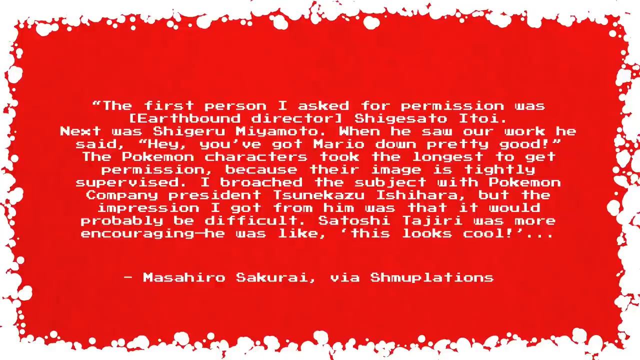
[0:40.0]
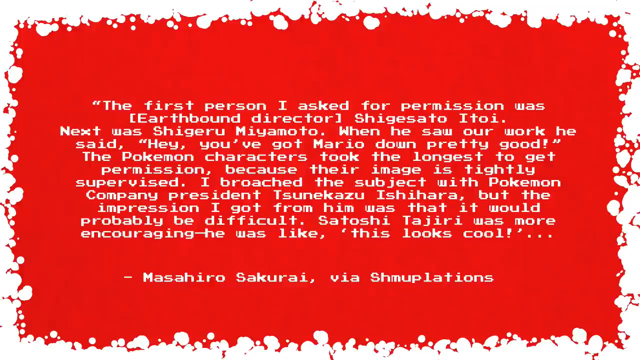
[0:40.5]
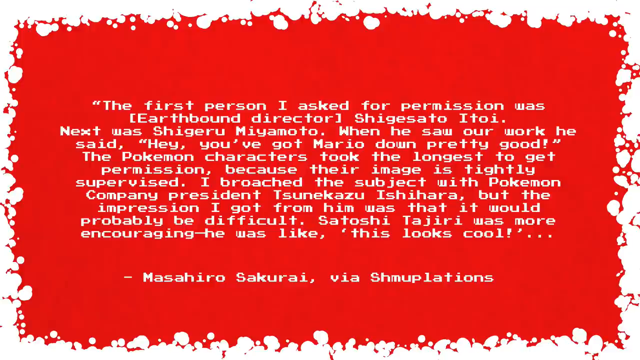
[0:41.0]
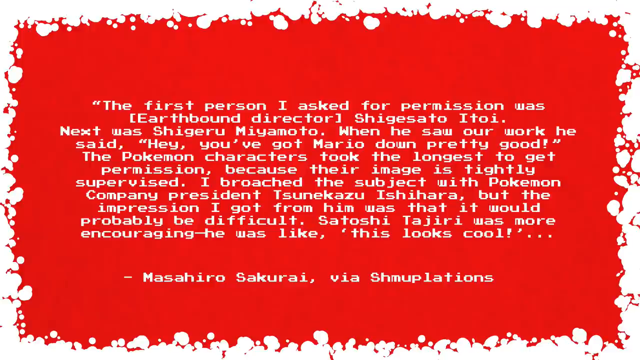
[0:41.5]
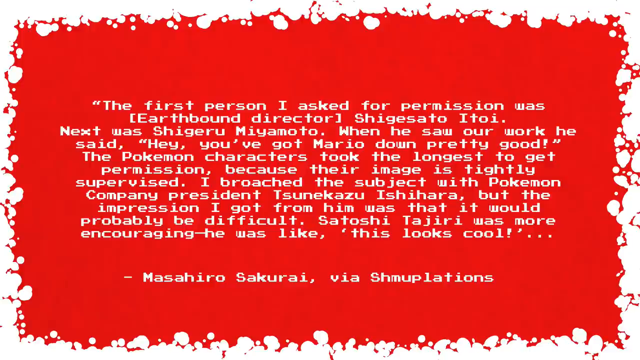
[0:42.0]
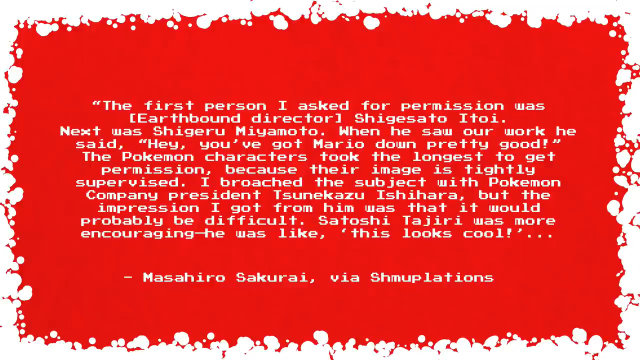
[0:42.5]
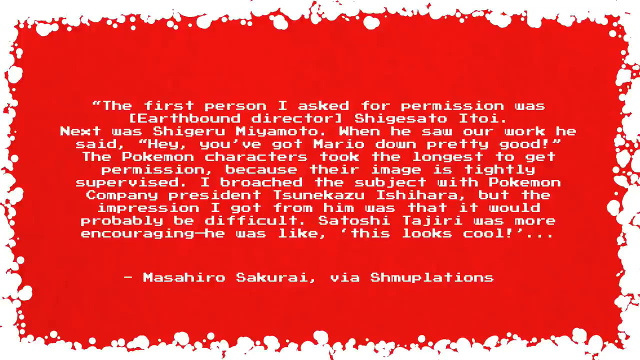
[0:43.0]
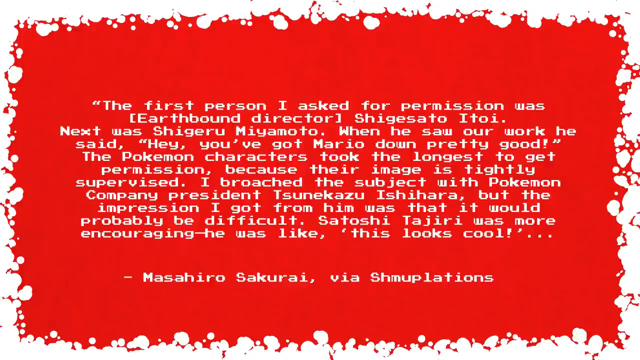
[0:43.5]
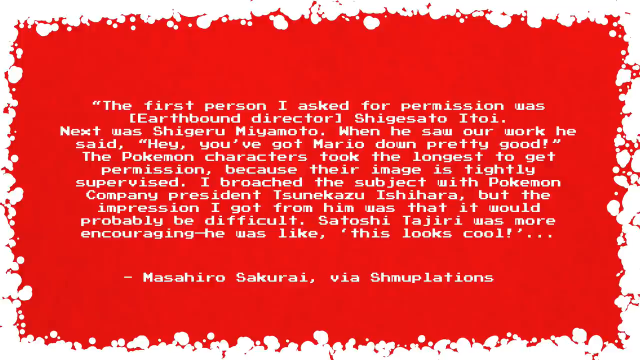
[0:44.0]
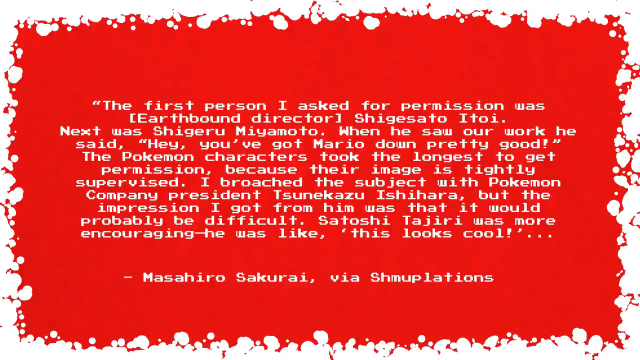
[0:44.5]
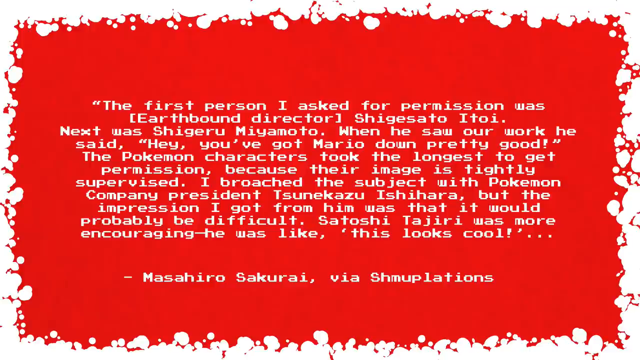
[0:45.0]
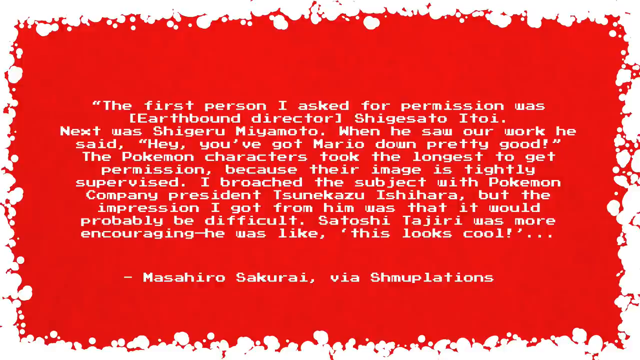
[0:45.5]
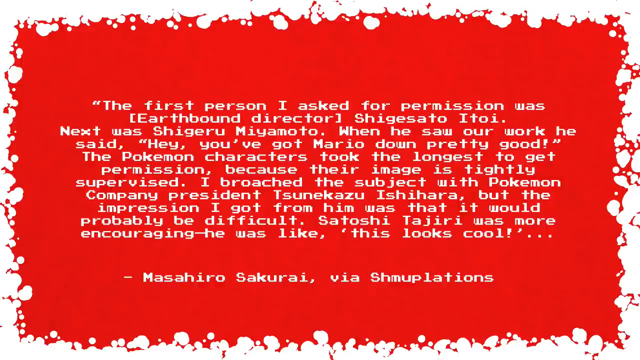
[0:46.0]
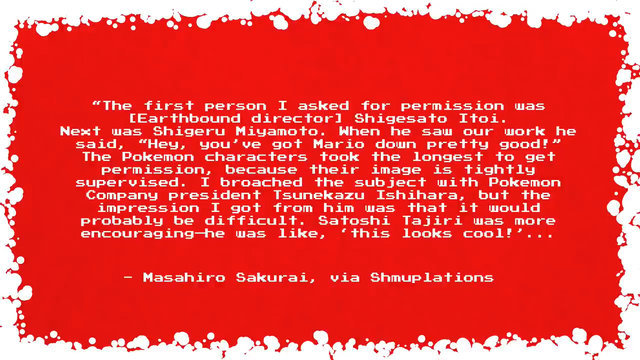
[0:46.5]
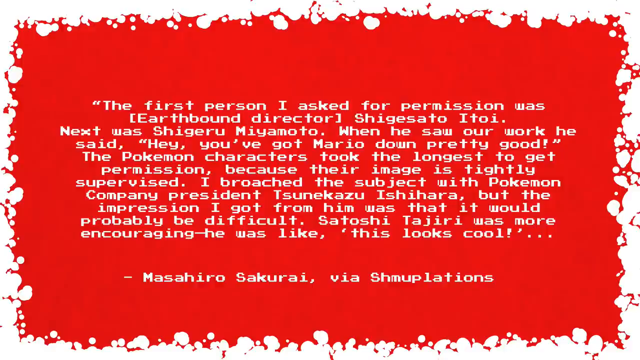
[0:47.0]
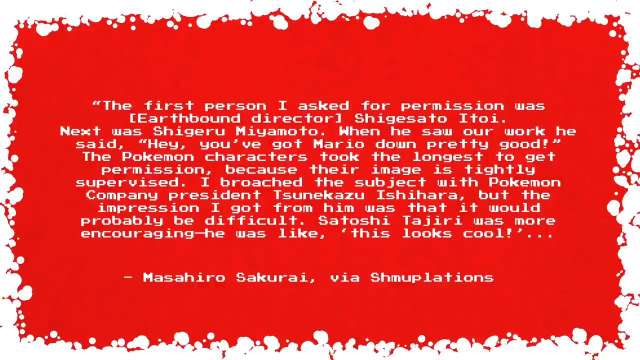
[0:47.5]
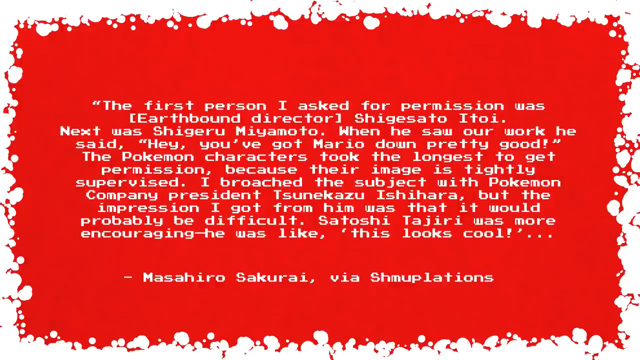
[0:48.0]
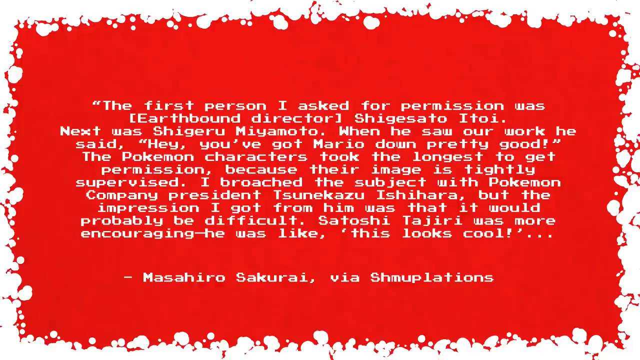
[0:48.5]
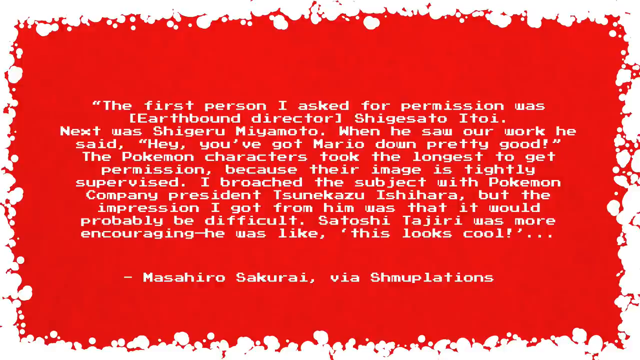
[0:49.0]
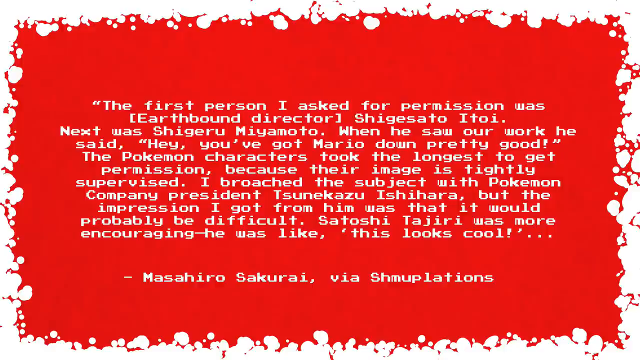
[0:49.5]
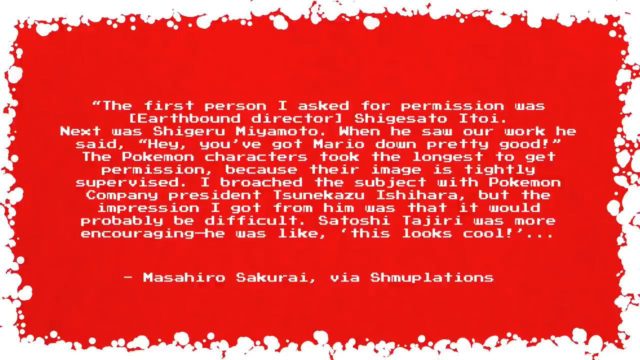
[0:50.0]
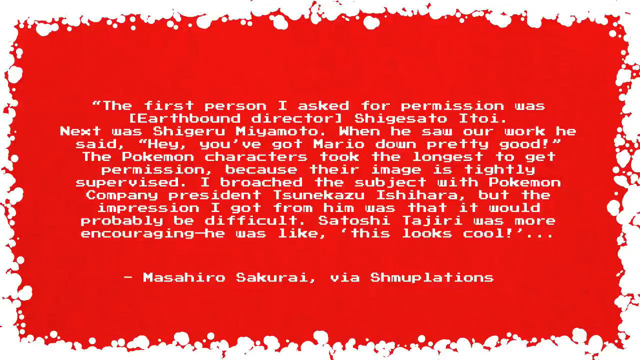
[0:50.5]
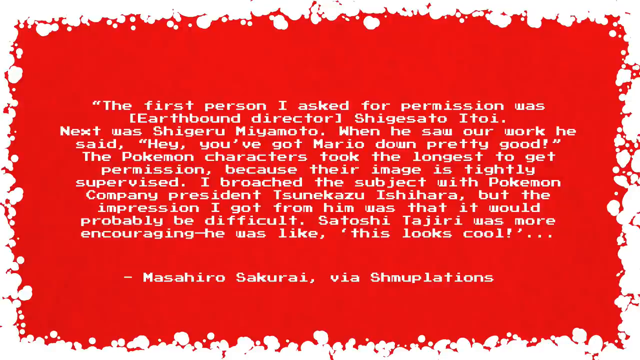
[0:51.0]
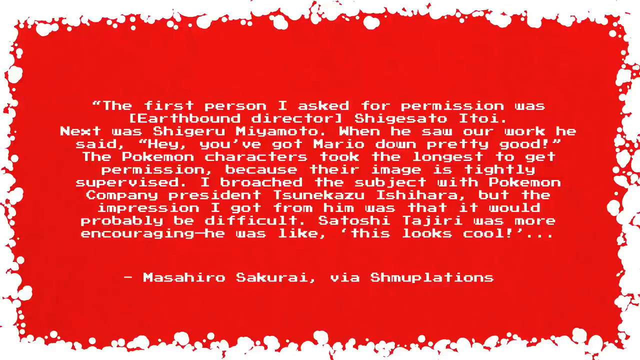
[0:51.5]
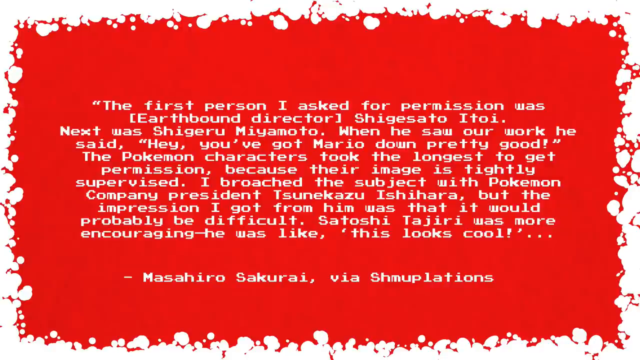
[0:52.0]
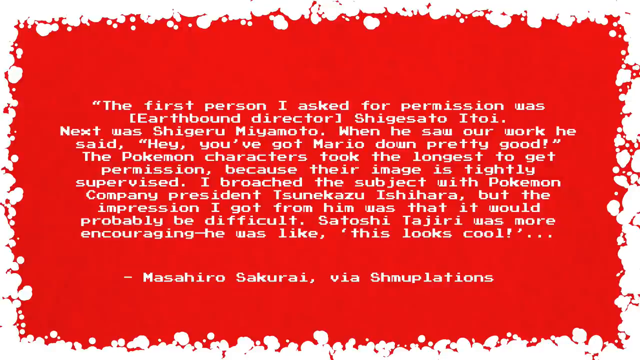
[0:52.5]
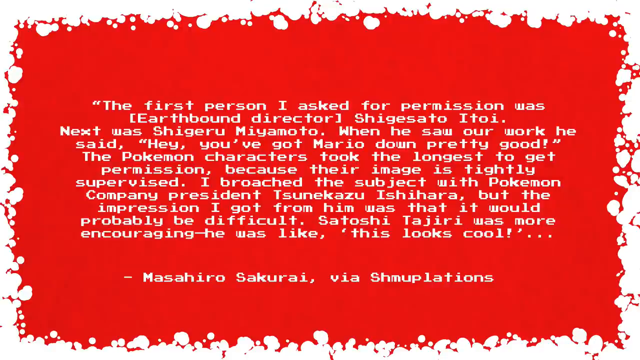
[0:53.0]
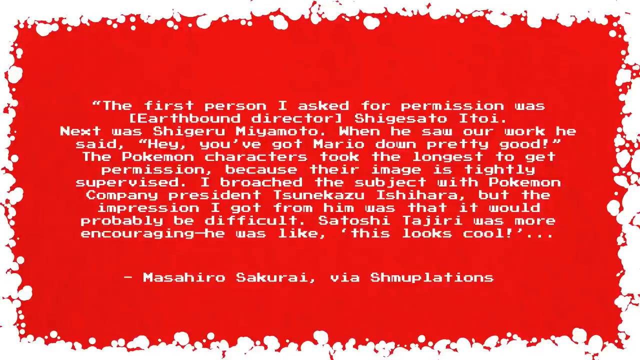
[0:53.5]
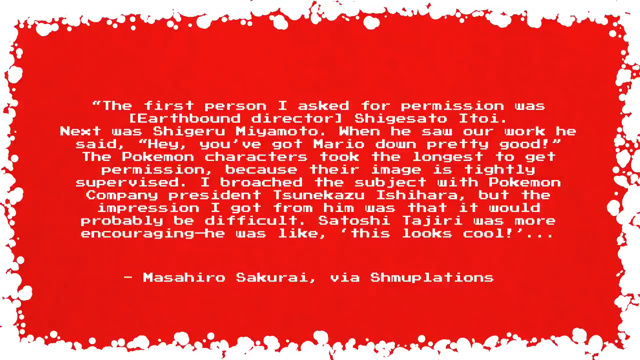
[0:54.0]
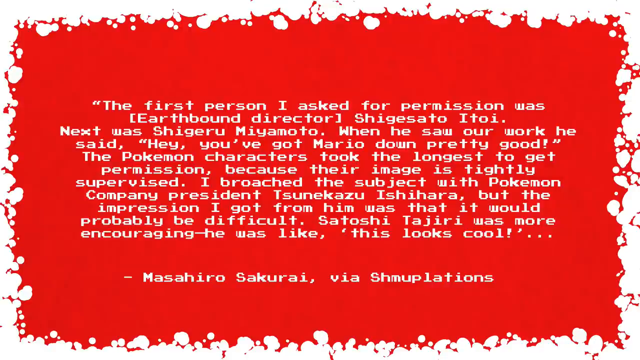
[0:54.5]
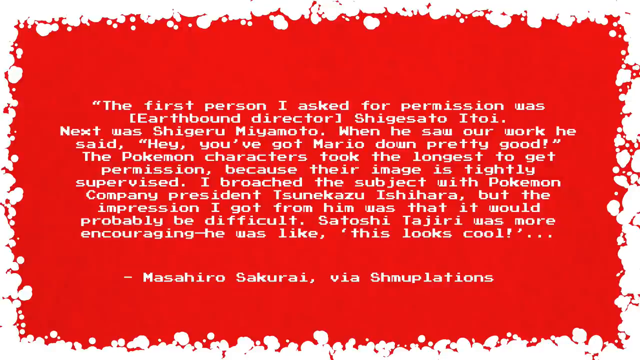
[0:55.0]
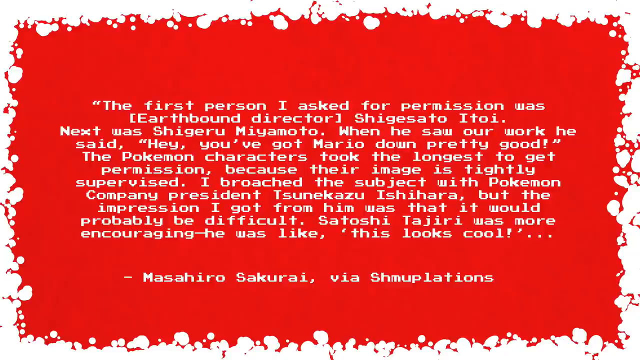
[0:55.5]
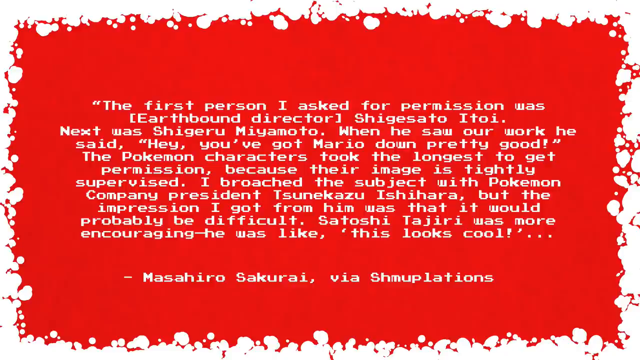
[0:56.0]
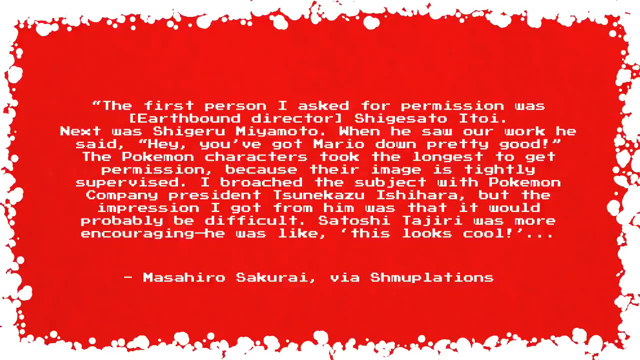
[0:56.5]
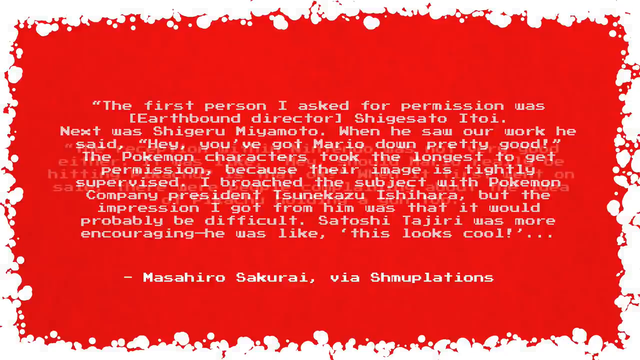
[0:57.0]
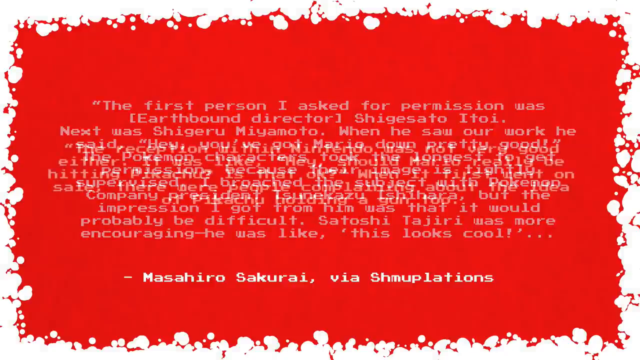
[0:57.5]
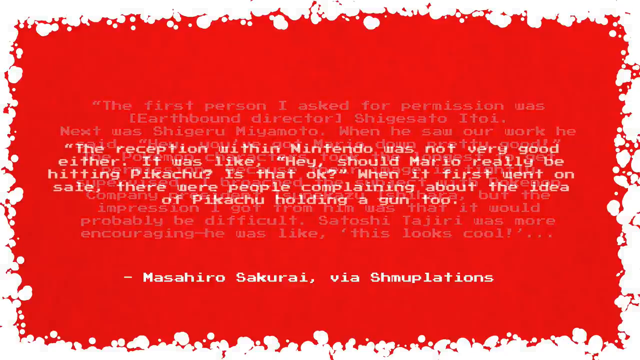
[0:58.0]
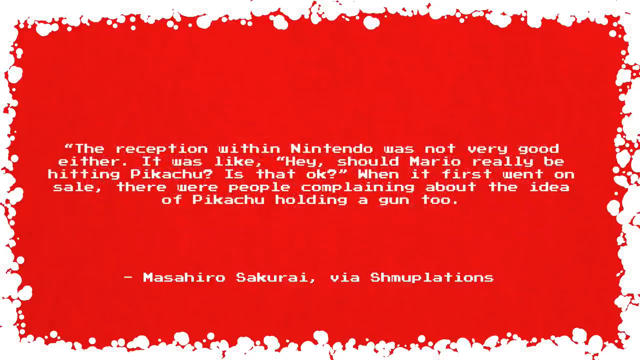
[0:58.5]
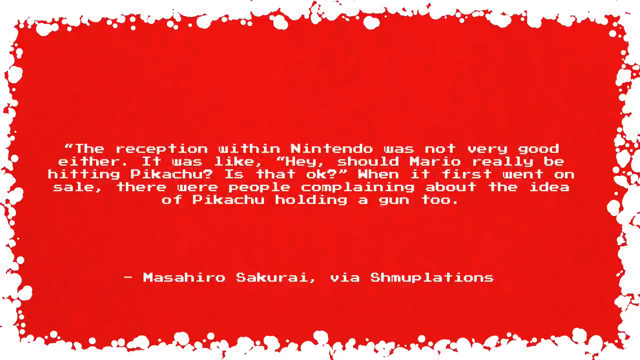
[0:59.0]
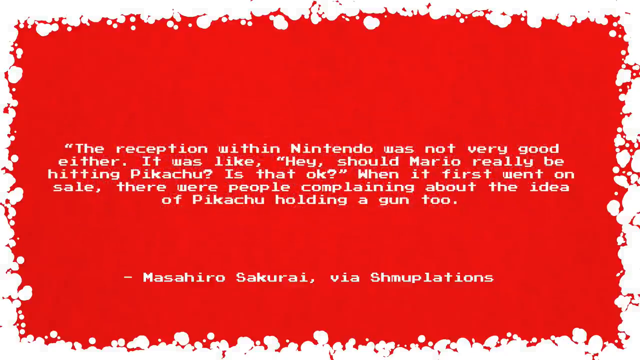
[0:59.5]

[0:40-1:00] The long white text remains on the screen over the red background, with kind of burn or even blood-like markings surrounding the edges of the image. The text then switches to another passage, which reads: "The reception within Nintendo was not very good either. It was like, hey, should Mario really be hitting Pikachu? Is that okay? When it first went on sale, there were people complaining about the idea of Pikachu holding a gun." The white text sits in the middle of the screen, and there is more text at the bottom of the screen, attributing it to Masahiro Sakurai via Shmuplation. The red background and the burn or blood marks around the outside kind of give the image some texture.